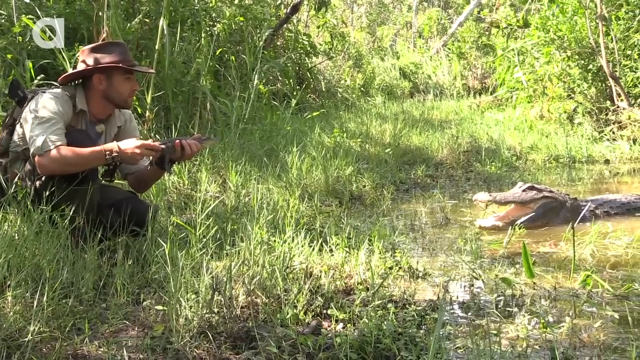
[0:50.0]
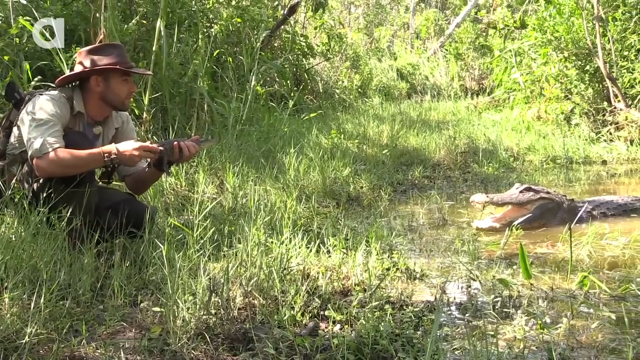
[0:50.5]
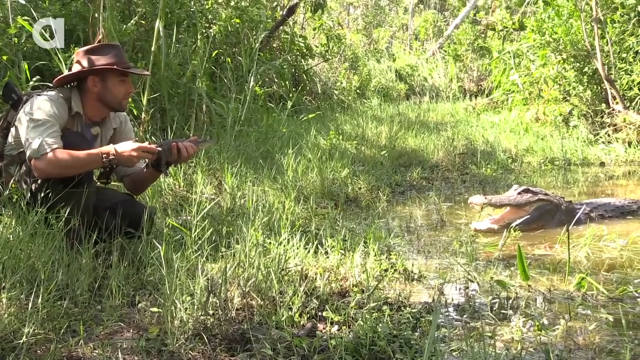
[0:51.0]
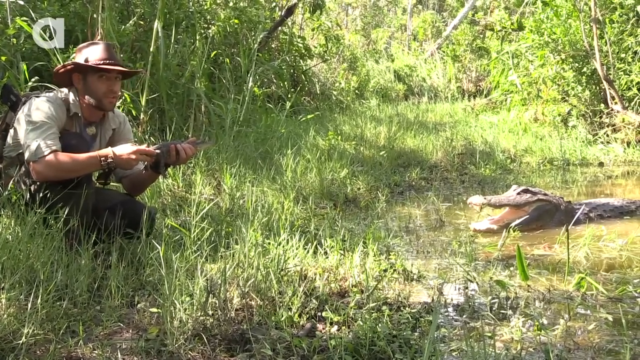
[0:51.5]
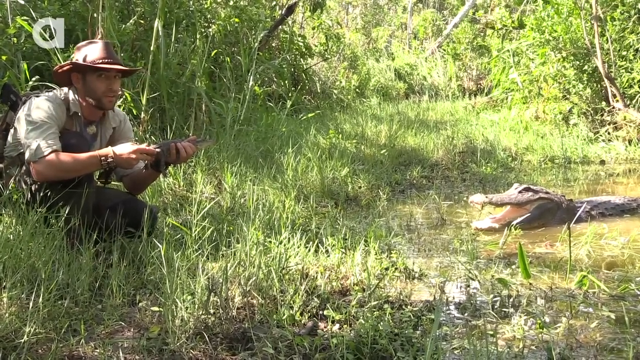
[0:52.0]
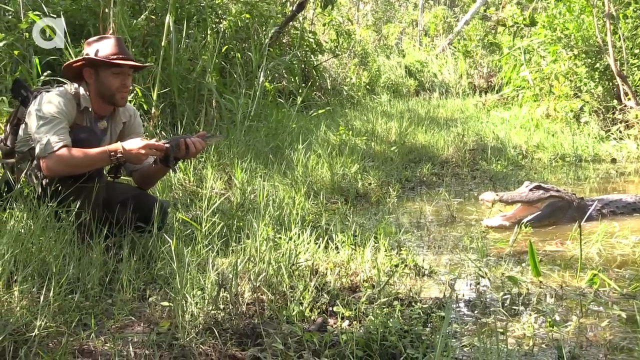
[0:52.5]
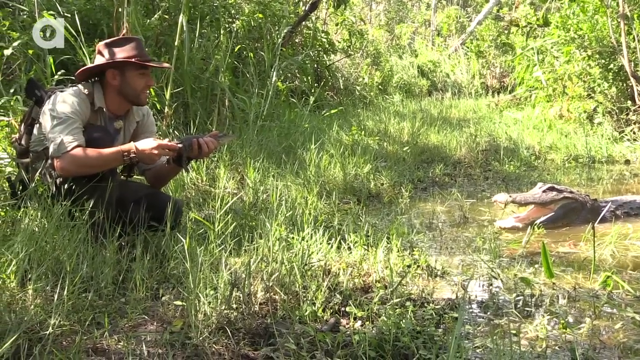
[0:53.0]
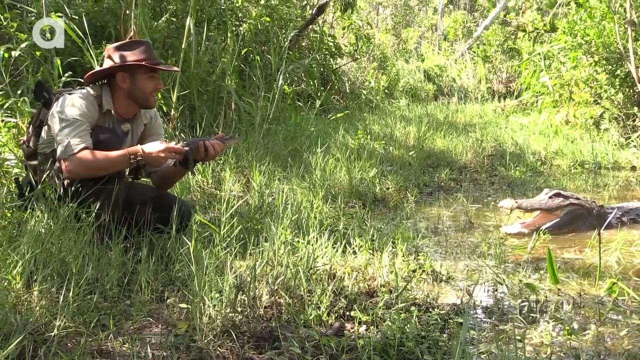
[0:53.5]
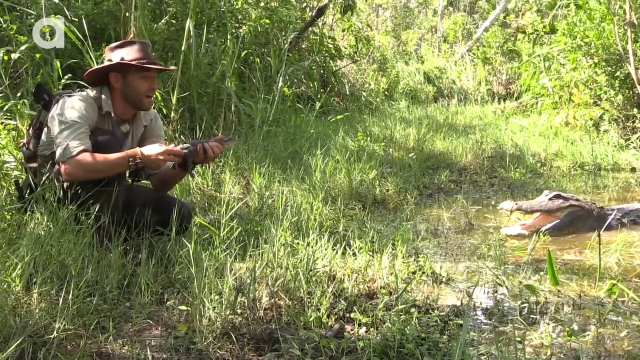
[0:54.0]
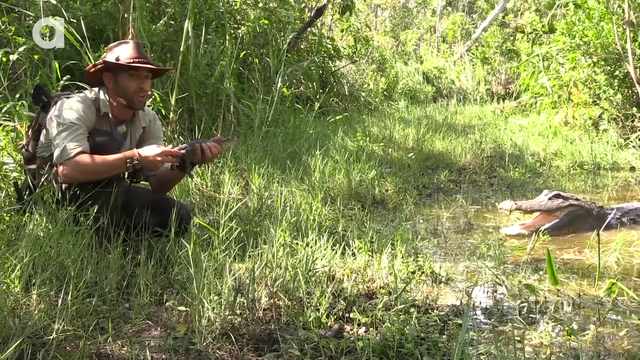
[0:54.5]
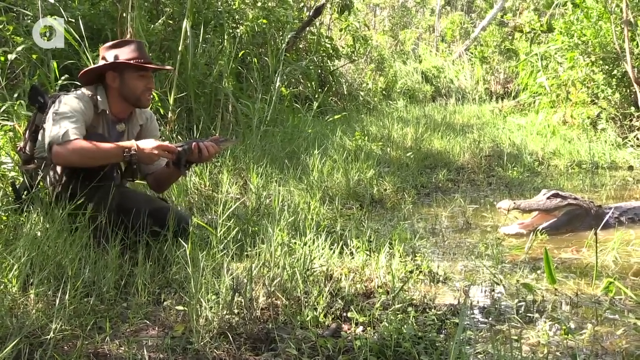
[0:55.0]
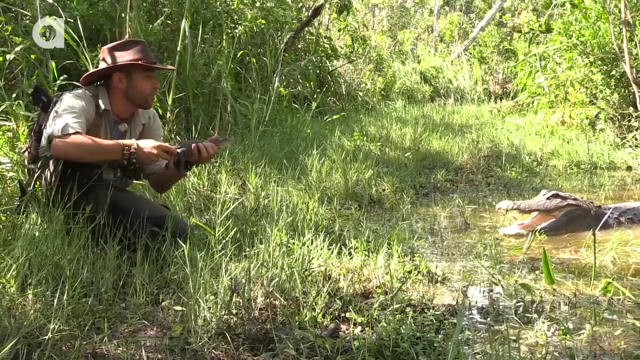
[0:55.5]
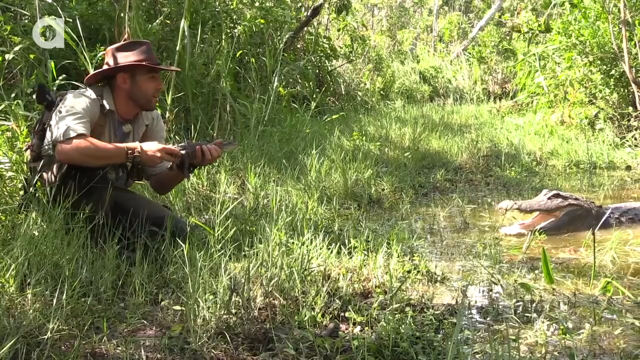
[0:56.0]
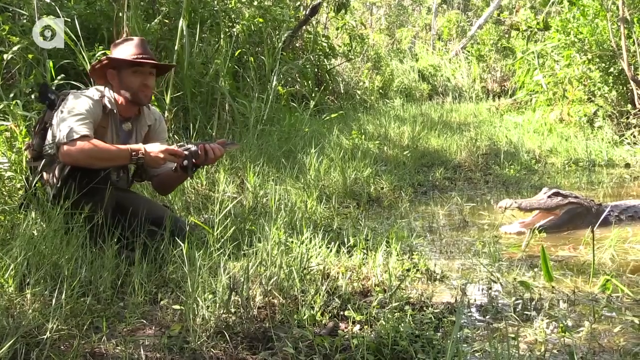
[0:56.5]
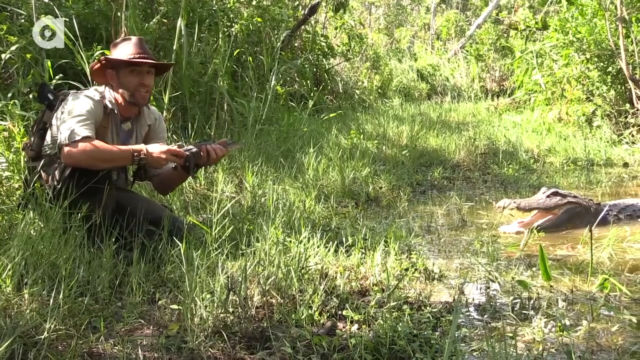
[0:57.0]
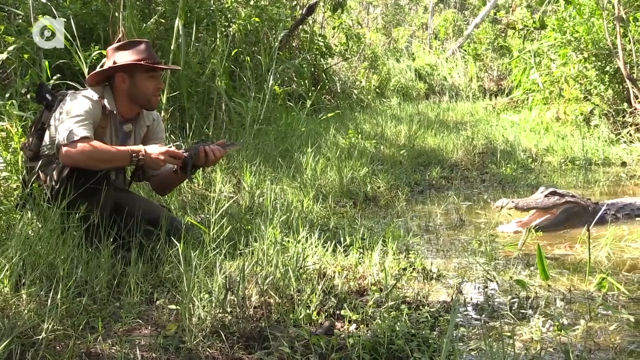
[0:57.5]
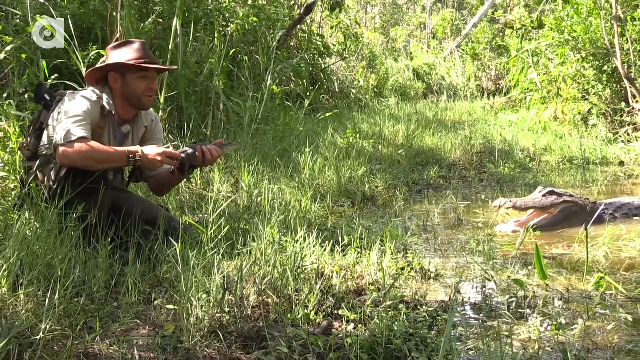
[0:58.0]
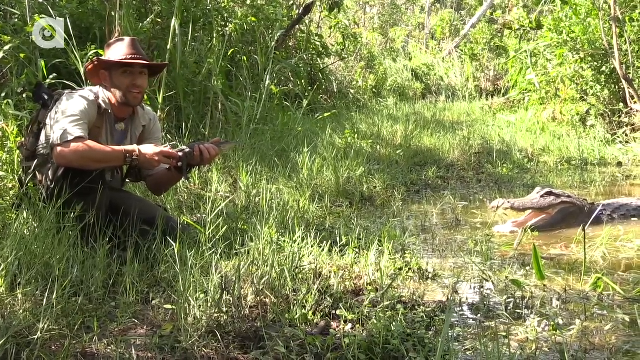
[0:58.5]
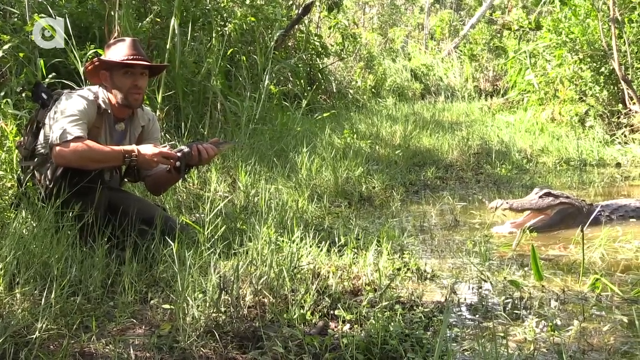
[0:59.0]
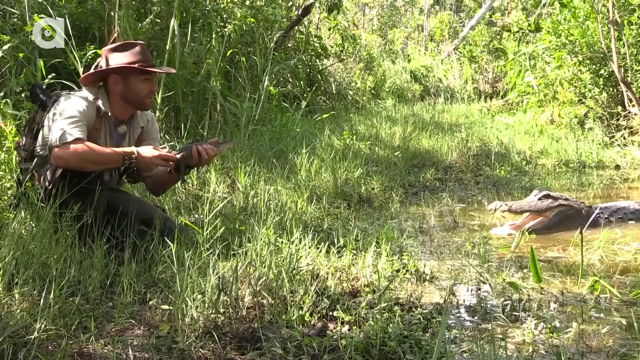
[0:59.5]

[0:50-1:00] The same scene continues: the man is crouched on the left side of the screen near a body of water, holding the baby alligator in his left hand, with the presumed mother alligator on the right with her mouth open. The man is near some larger plants that provide shade and cast a shade pattern on his body, while the mother alligator is in very bright light, creating a contrast of shadow and light. The man moves and talks to the camera a bit, without moving much, and keeps looking back at the mother alligator, apparently to make sure he stays safe.